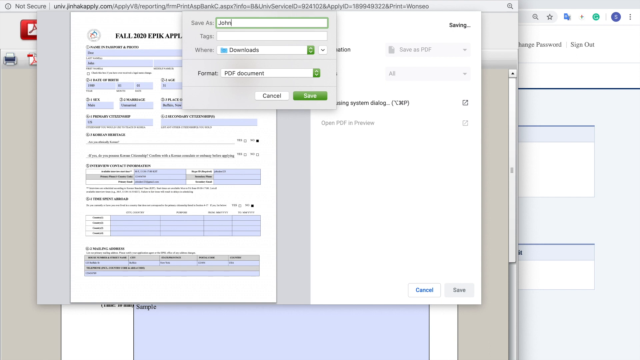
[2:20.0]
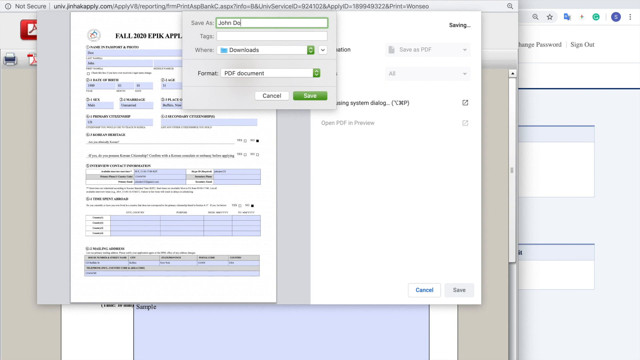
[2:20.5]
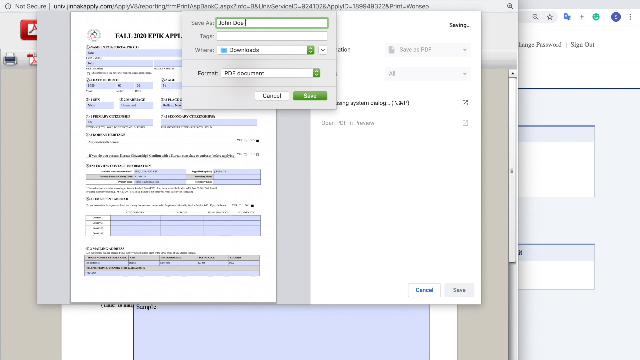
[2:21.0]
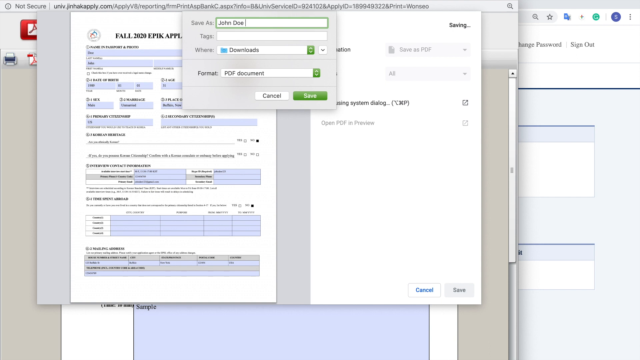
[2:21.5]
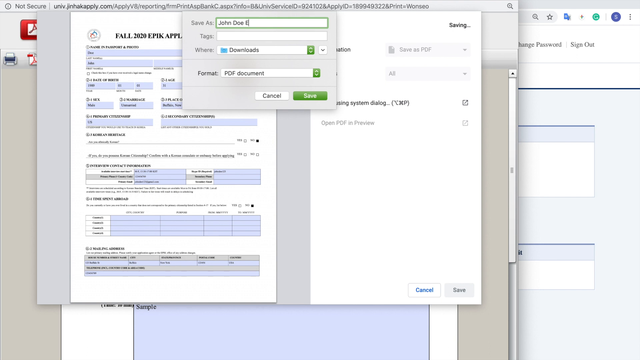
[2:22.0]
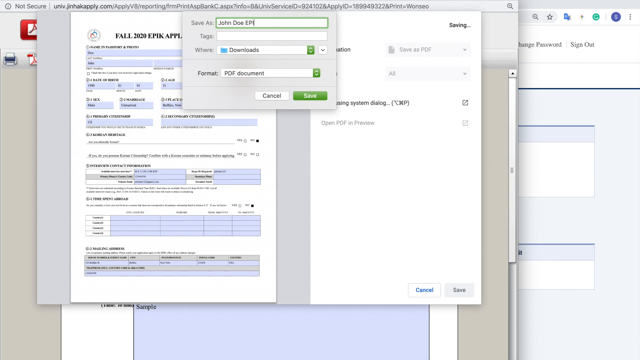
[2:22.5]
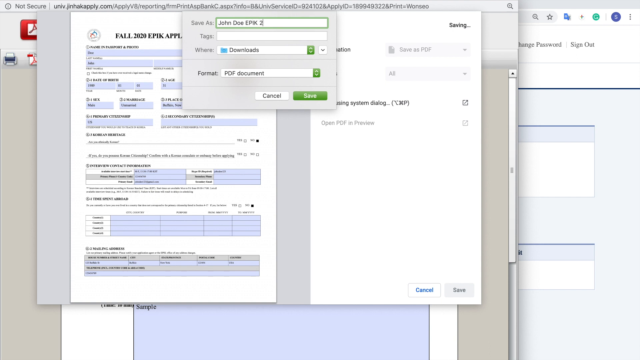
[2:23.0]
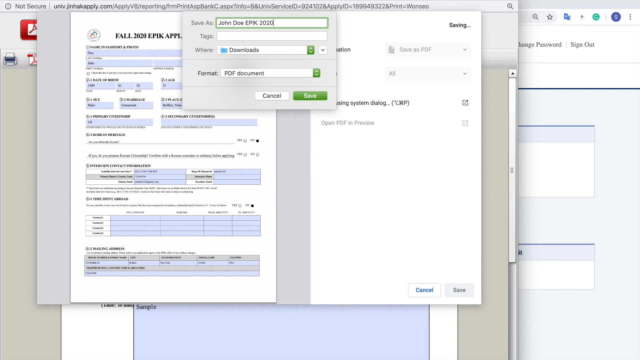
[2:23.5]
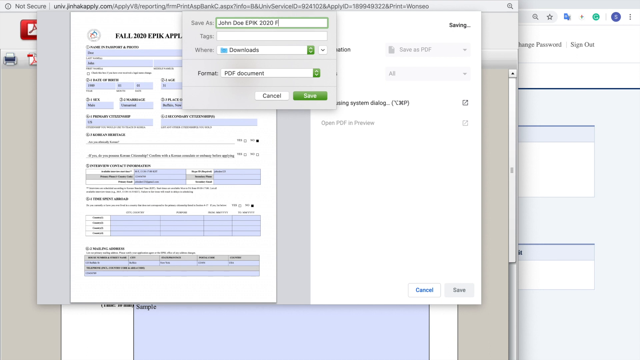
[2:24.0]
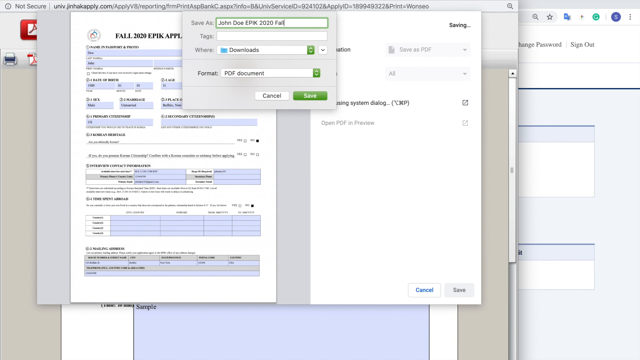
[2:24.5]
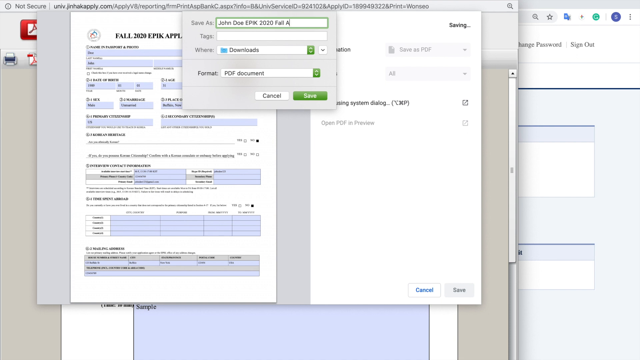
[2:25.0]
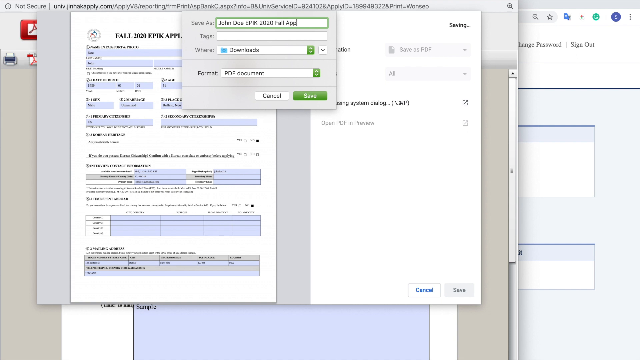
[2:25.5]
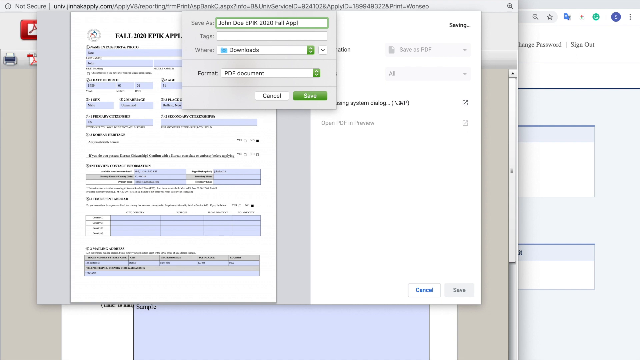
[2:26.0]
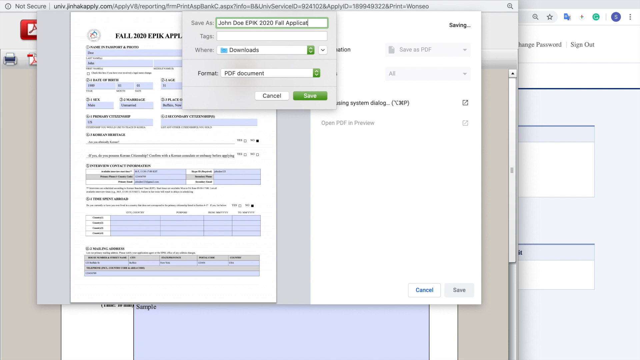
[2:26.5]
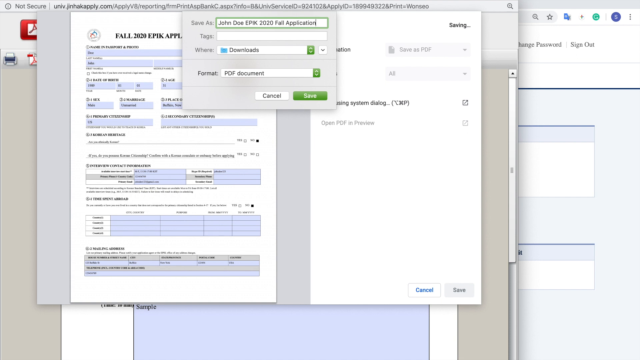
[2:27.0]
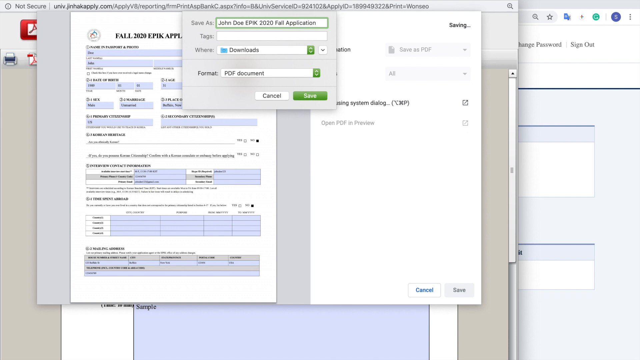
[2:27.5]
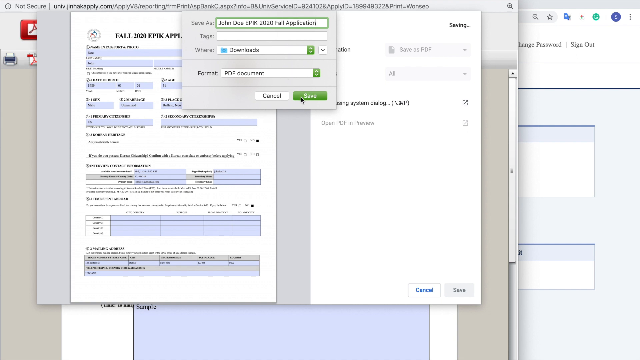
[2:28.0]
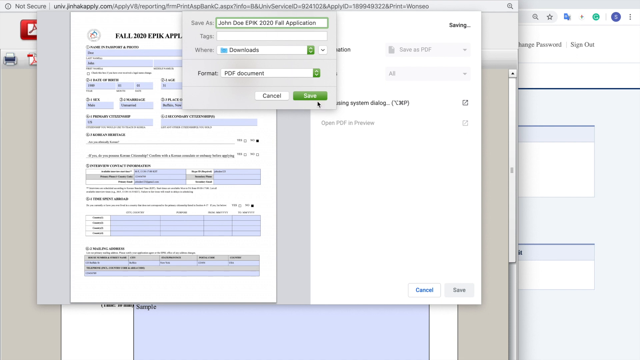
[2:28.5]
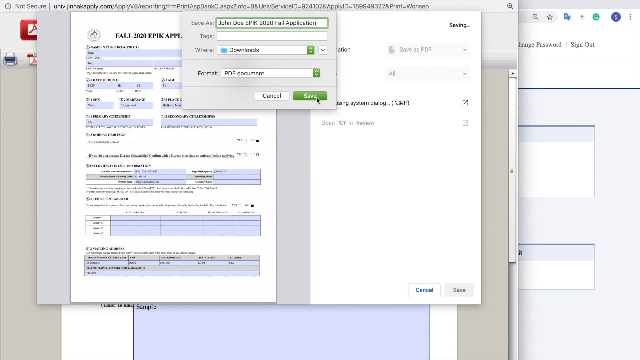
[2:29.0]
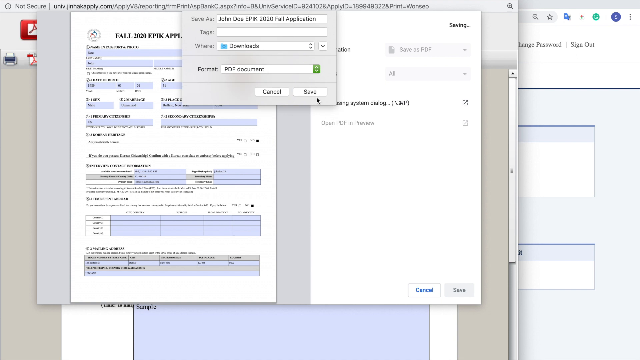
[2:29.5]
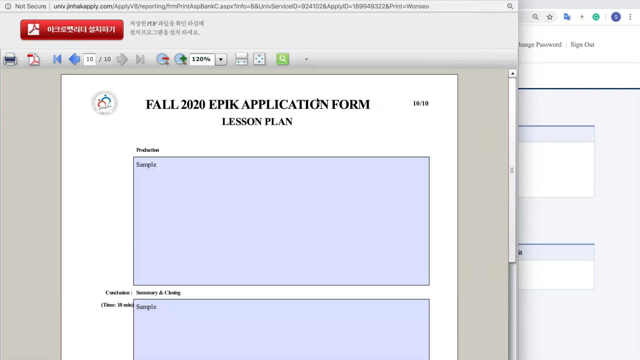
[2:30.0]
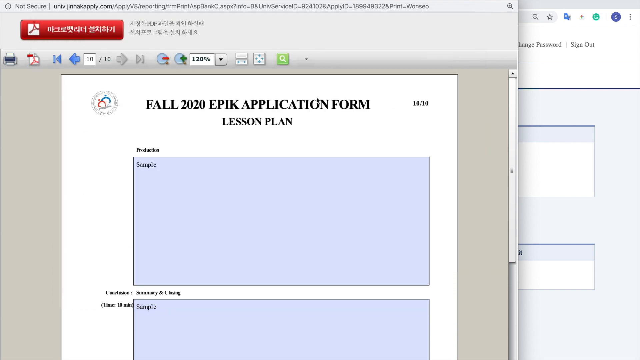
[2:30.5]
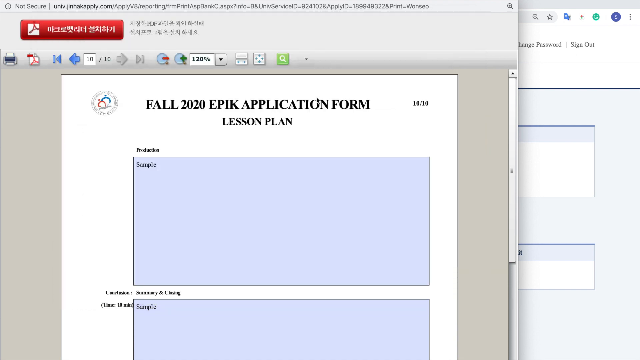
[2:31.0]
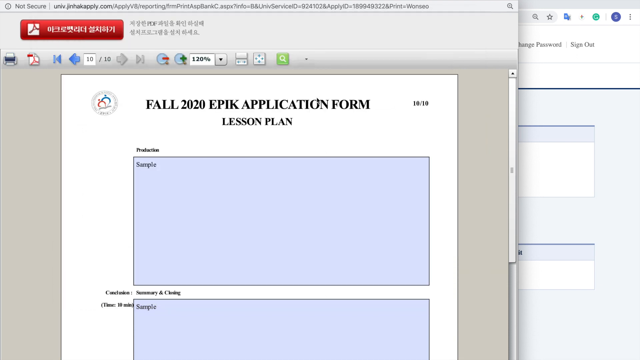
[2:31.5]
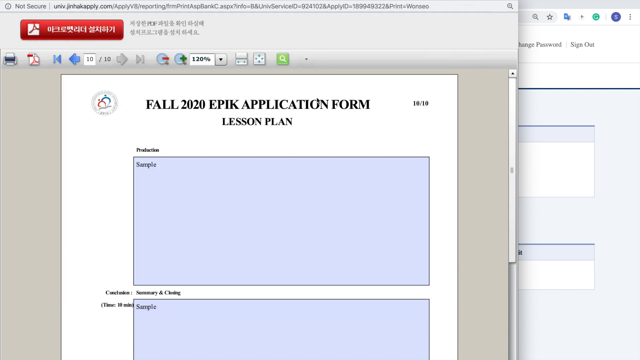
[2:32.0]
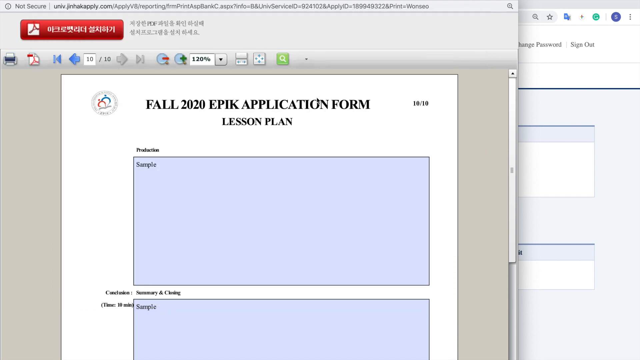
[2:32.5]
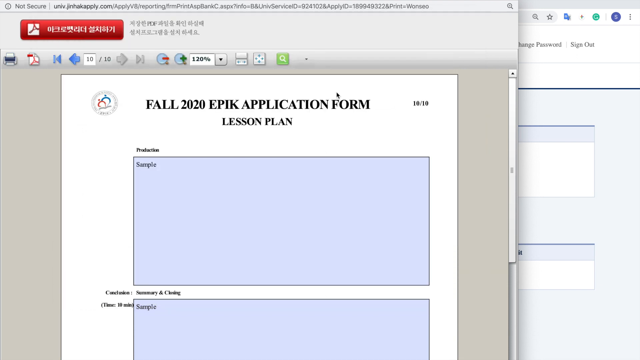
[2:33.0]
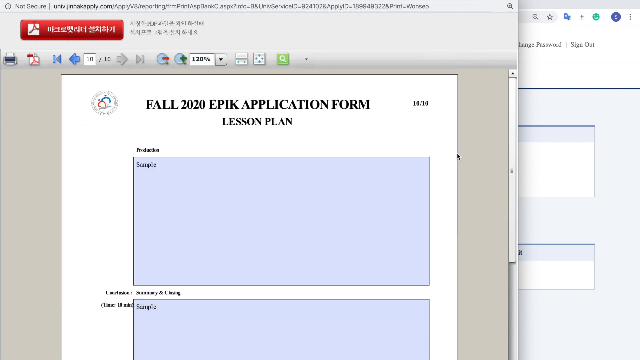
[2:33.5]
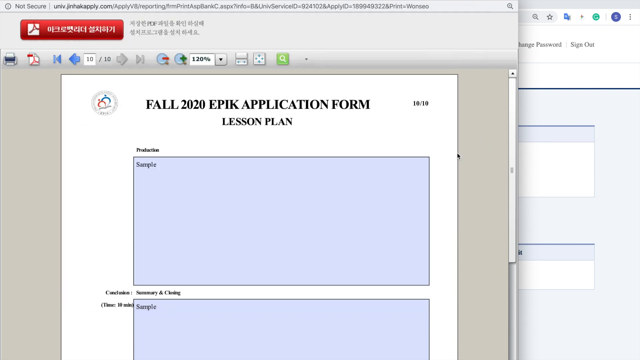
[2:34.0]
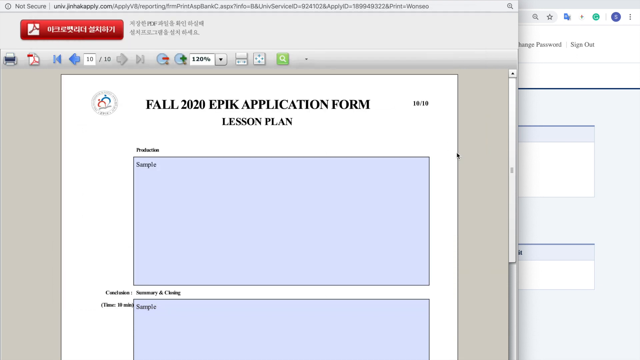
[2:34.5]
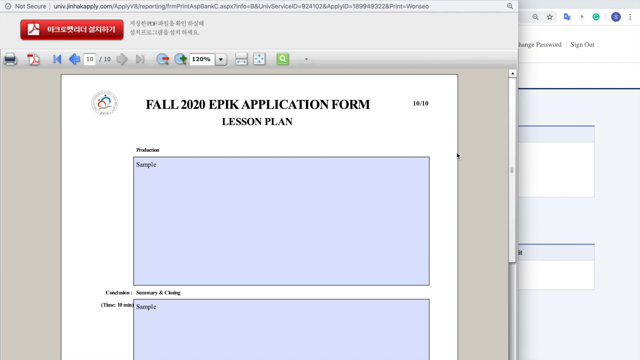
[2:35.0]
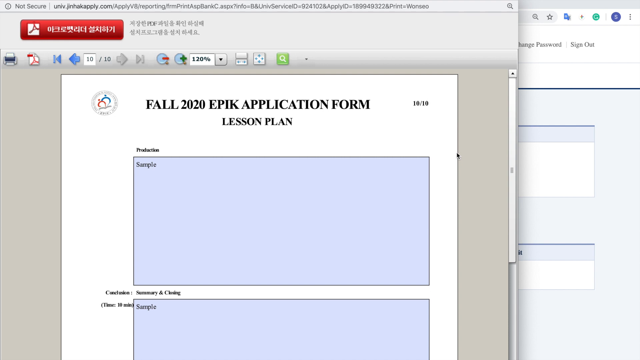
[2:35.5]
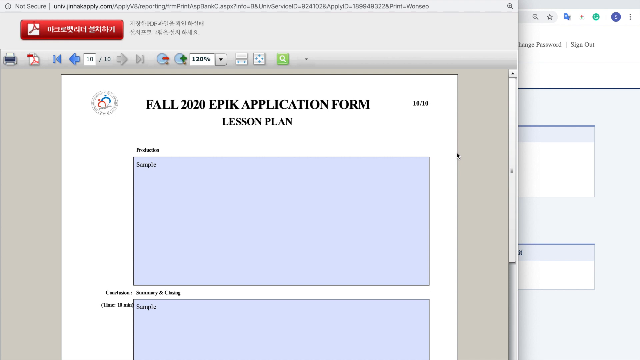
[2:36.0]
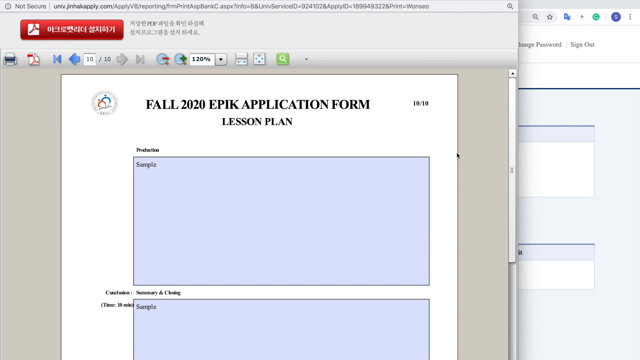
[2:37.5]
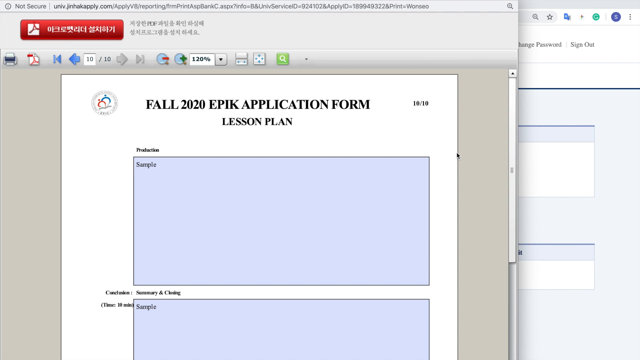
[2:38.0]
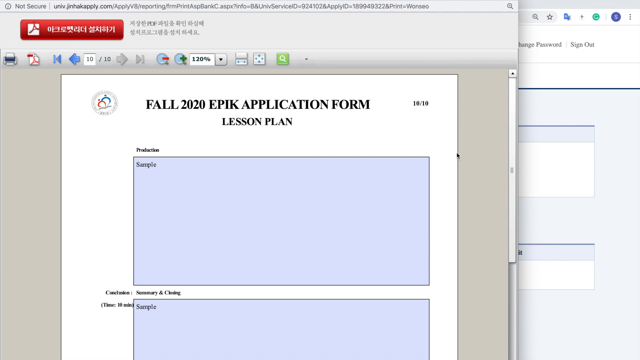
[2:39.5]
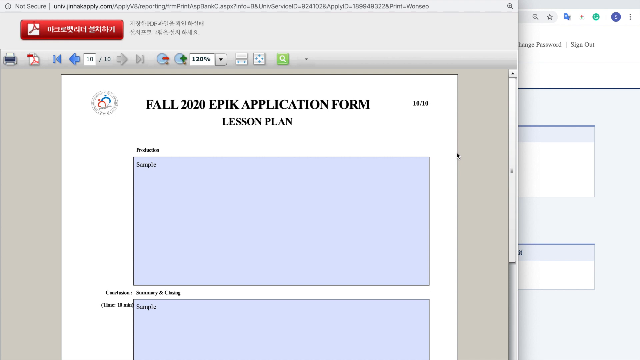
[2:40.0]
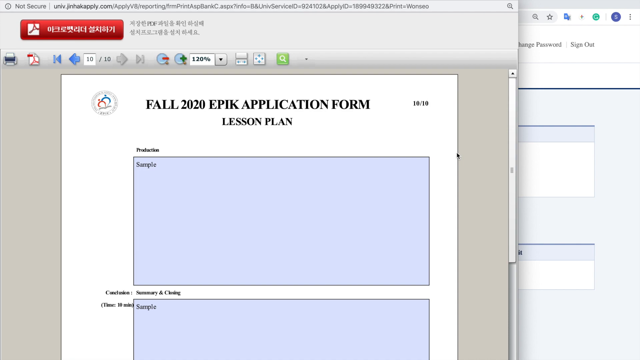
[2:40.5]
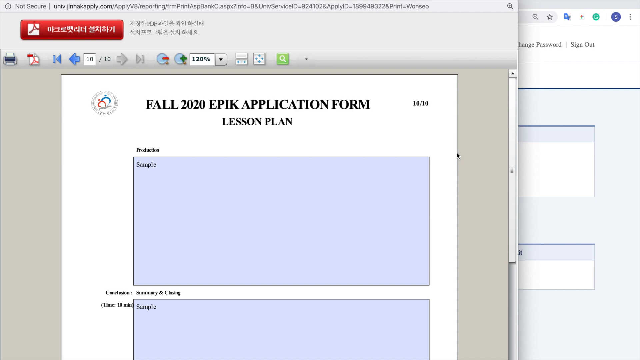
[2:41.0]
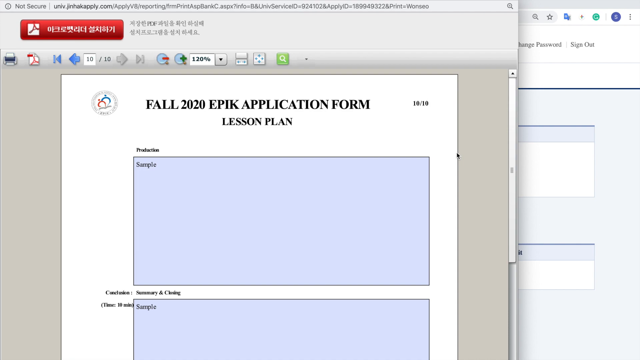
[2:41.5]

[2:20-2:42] At the end of the EPIK Fall 2020 online application, the person is printing. A save-as dialog shows a format option at the bottom and cancel and save buttons. The file is being saved as John Doe EPIC 2020 Fall application, and he clicks the green save button at the bottom right, saving all the filled-in fields and text.